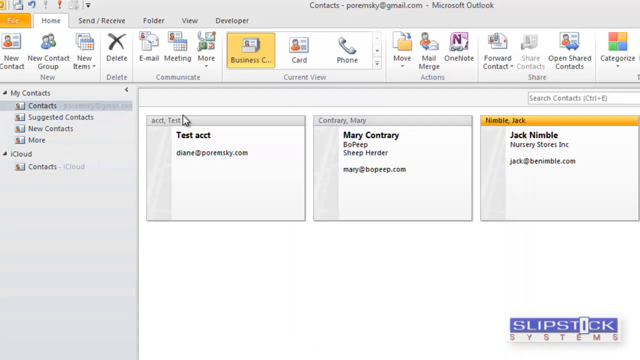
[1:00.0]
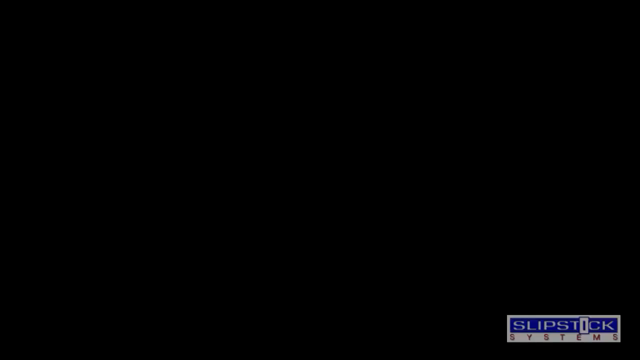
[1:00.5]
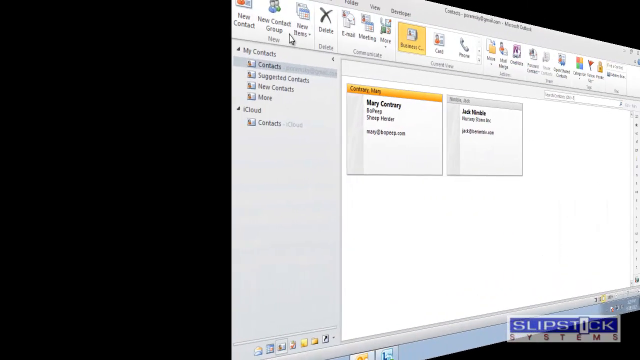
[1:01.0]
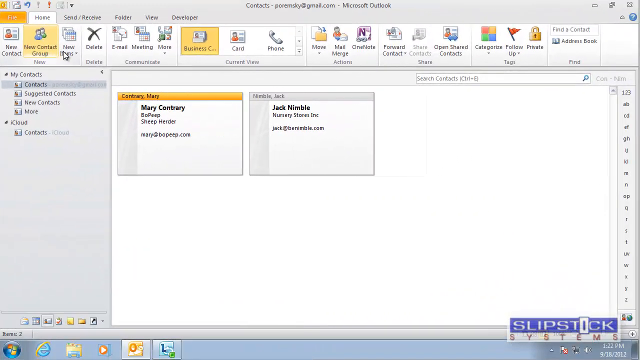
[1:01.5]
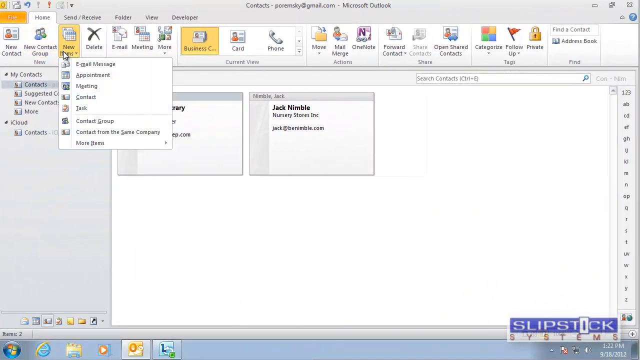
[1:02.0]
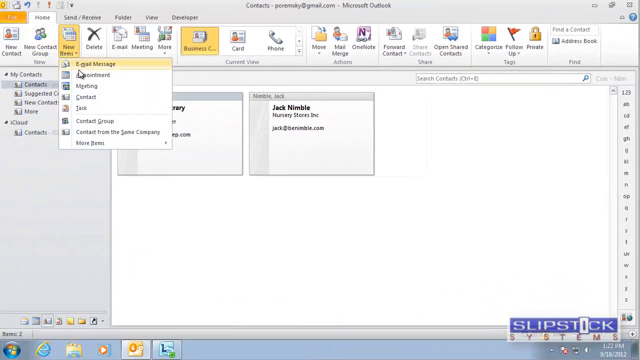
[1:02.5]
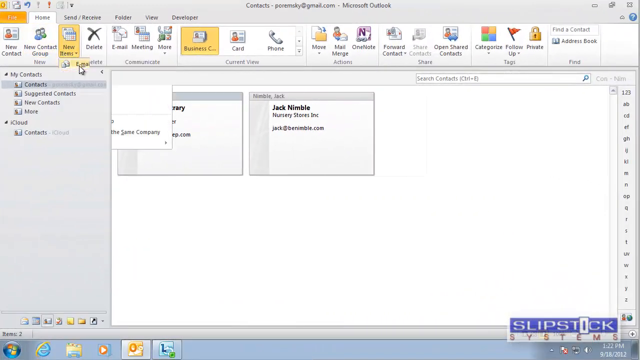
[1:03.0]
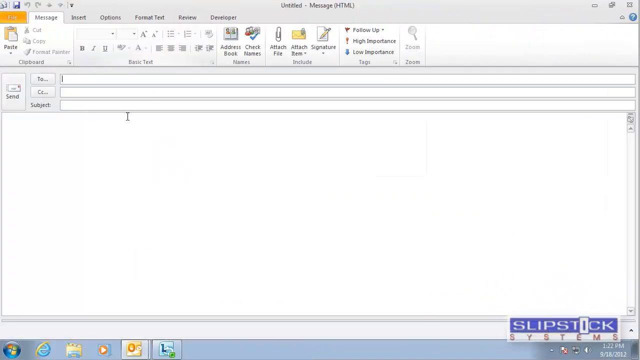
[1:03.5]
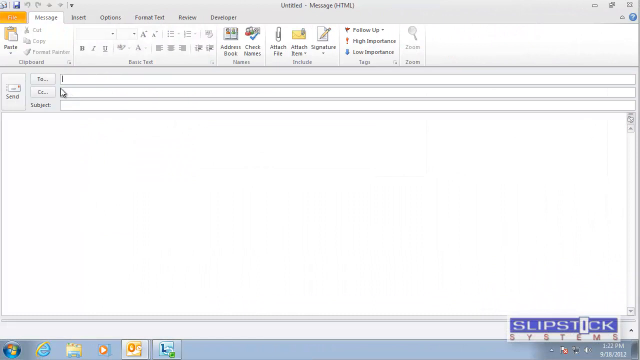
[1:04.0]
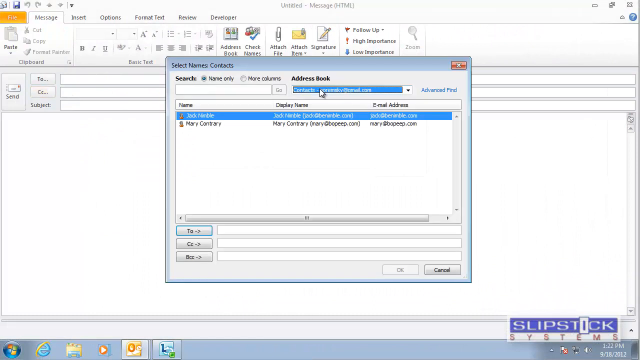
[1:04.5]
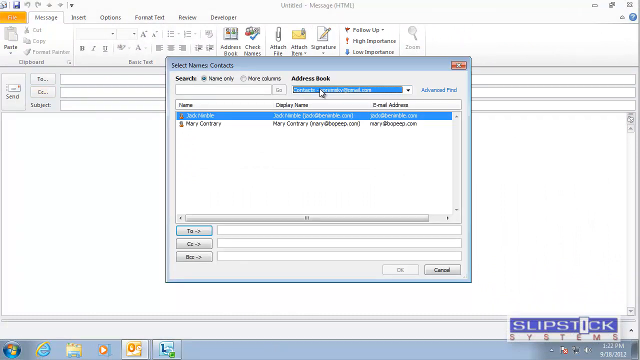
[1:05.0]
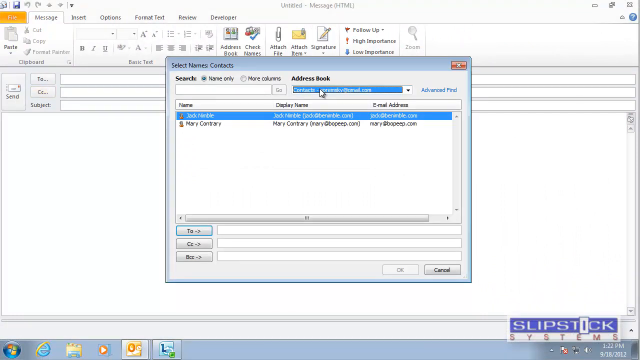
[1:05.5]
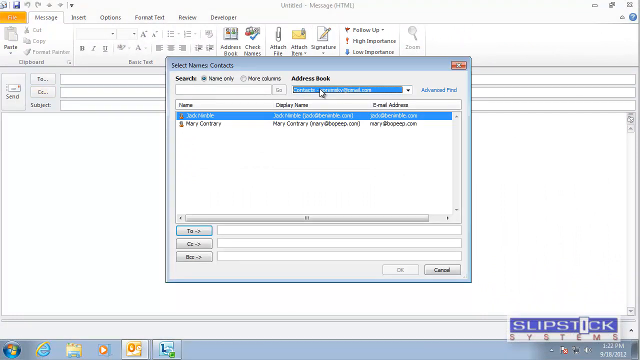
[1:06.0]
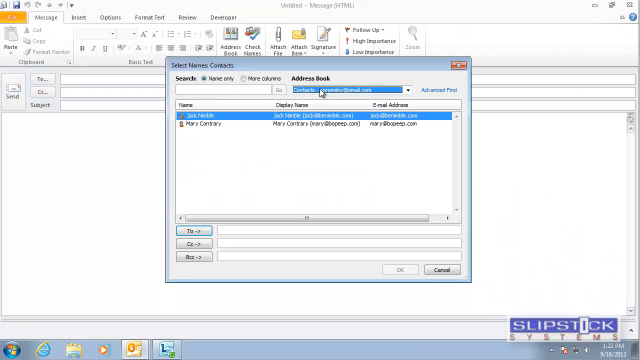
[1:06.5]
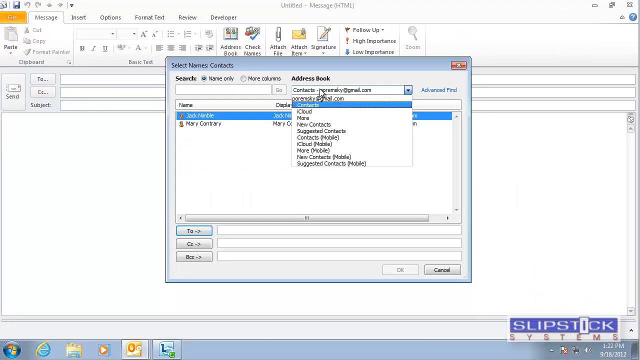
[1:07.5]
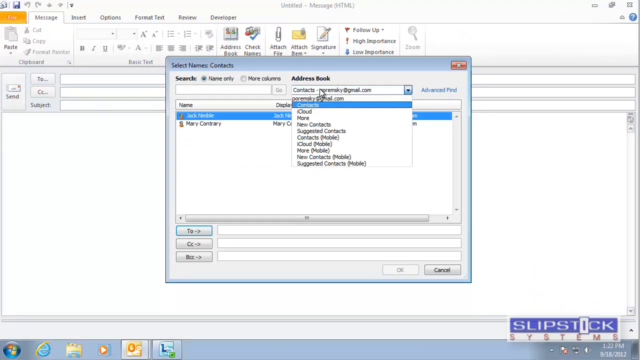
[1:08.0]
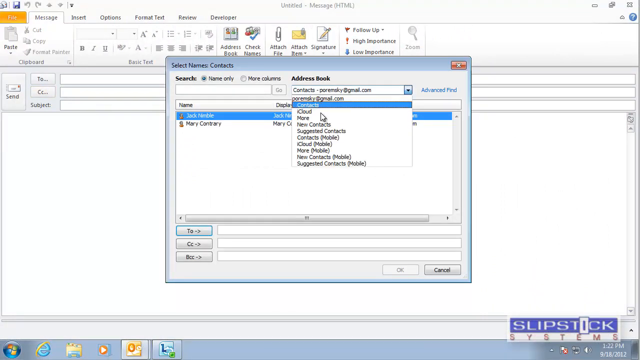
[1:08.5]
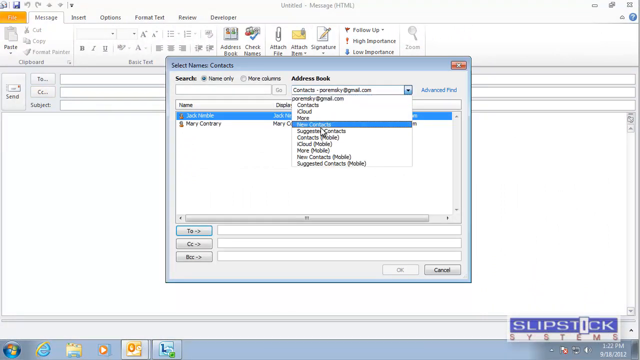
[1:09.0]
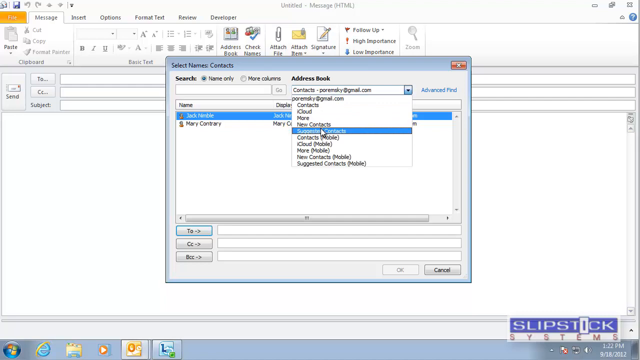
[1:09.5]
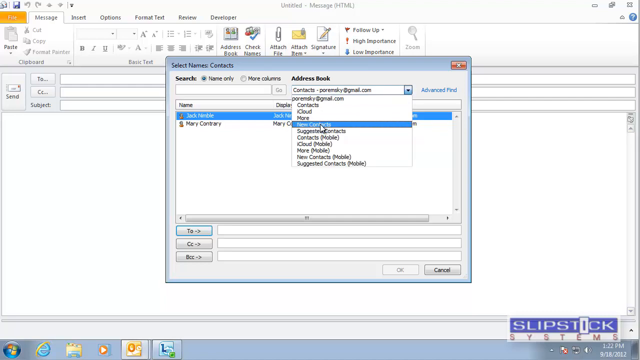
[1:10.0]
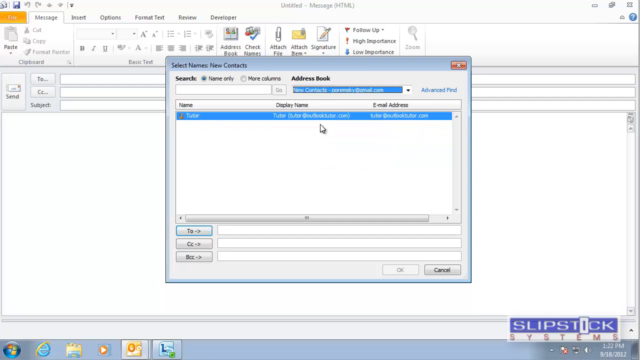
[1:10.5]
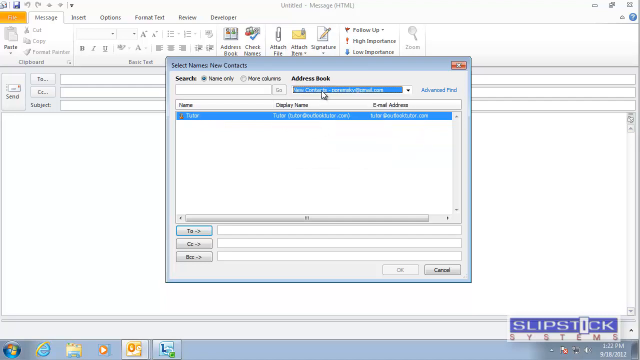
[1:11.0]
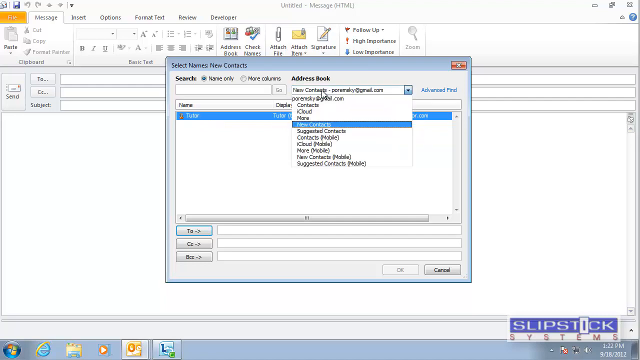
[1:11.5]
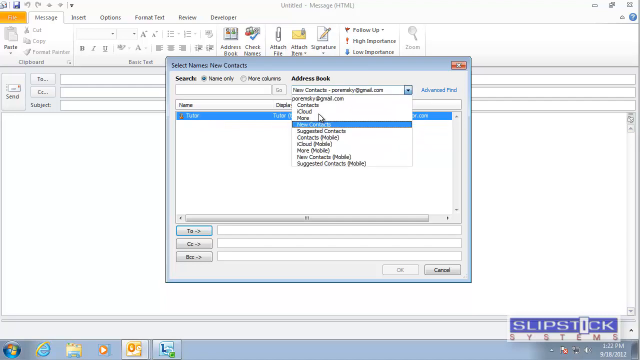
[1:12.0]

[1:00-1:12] A window for composing and sending an email is shown. At the very top are options including undo. Below that is a section with multiple tabs: message, insert, options, format text, review and developer; the message section is currently selected, showing its different options. A dialog box that says "Select Name Contact" appears from the address book, and contacts are selected. The dialog box has multiple options and fields to fill in and displays the name and the email.